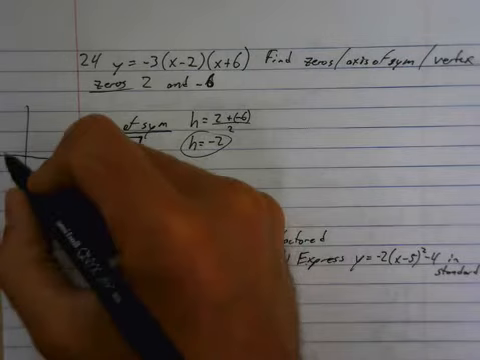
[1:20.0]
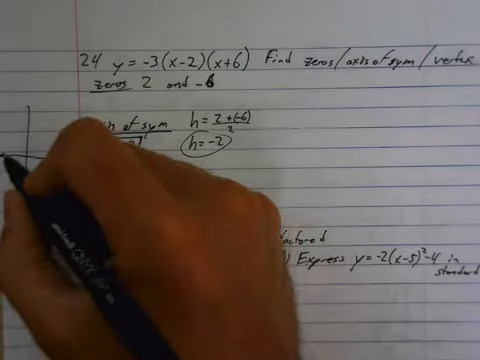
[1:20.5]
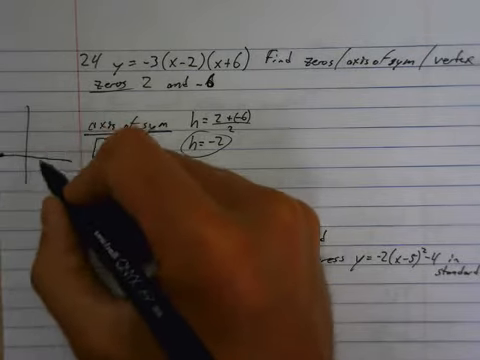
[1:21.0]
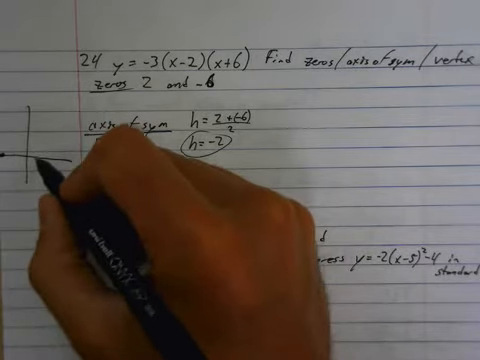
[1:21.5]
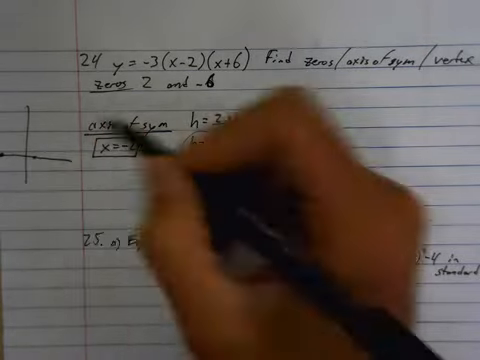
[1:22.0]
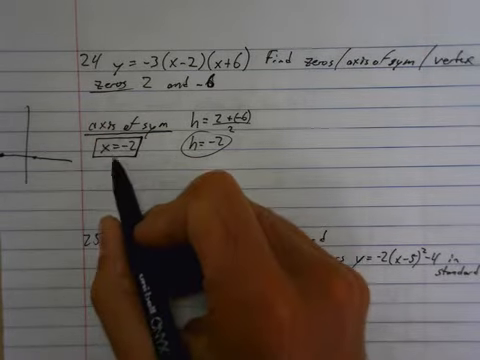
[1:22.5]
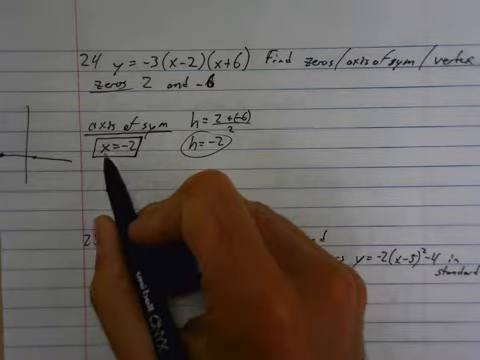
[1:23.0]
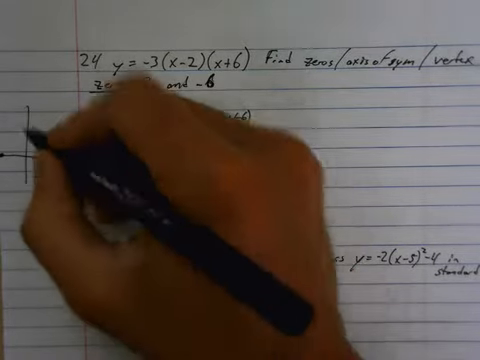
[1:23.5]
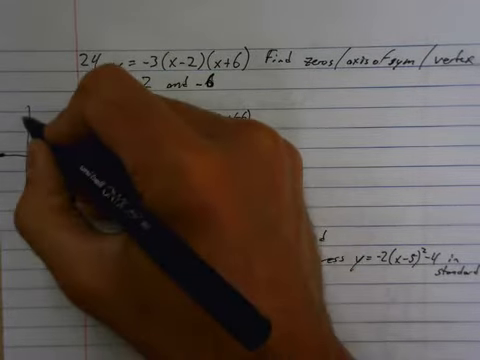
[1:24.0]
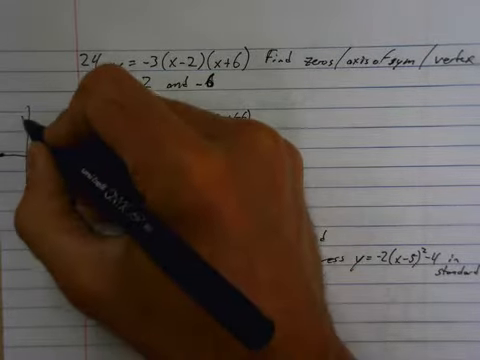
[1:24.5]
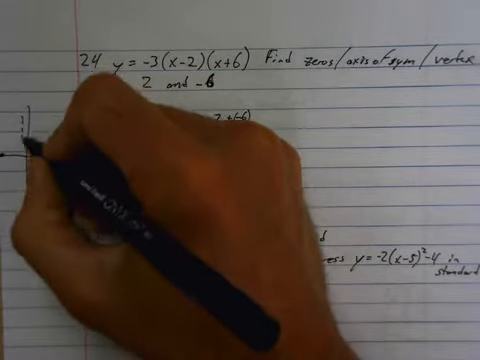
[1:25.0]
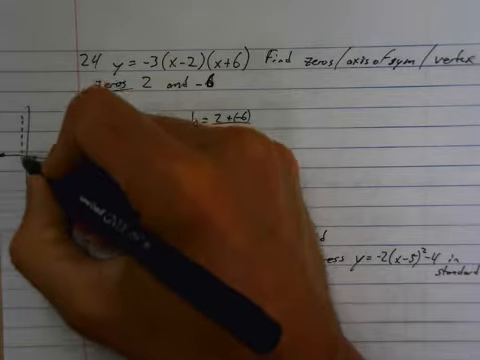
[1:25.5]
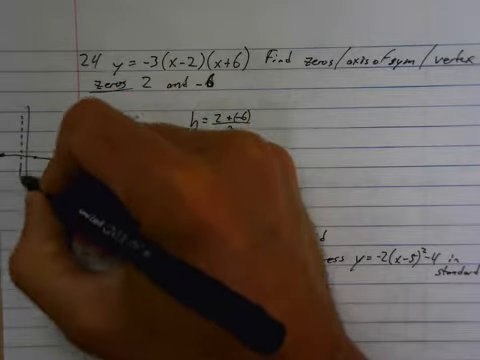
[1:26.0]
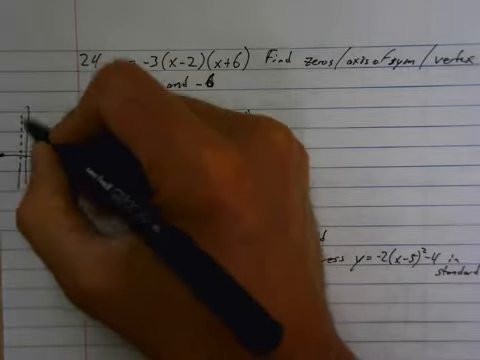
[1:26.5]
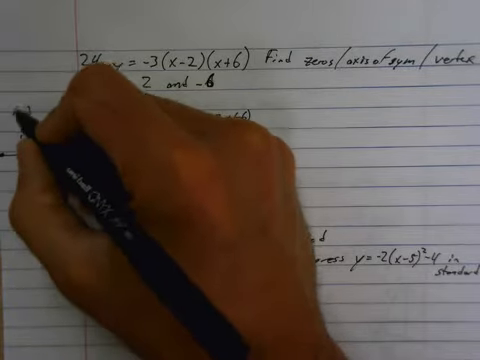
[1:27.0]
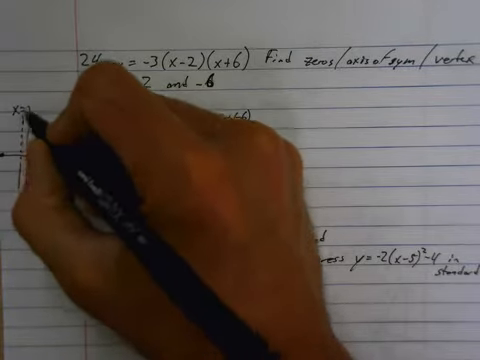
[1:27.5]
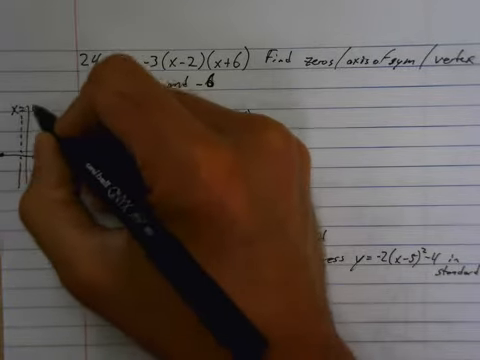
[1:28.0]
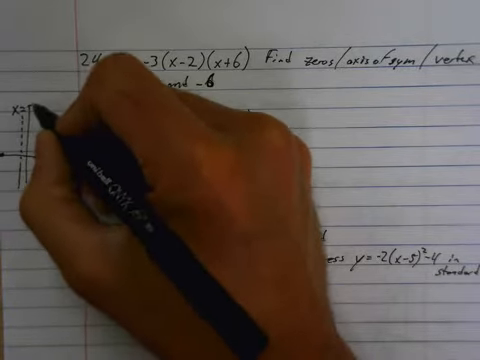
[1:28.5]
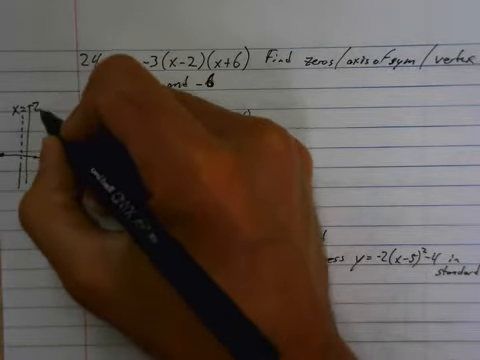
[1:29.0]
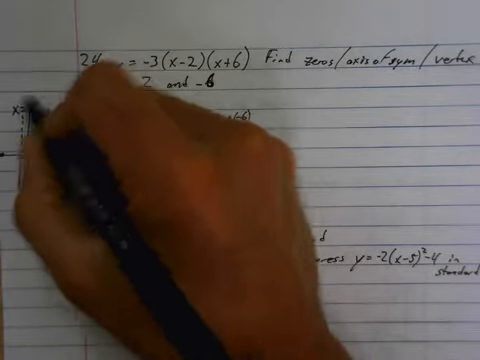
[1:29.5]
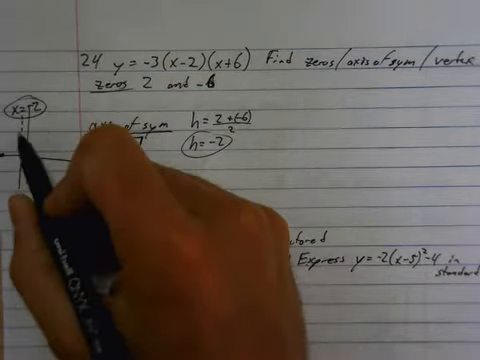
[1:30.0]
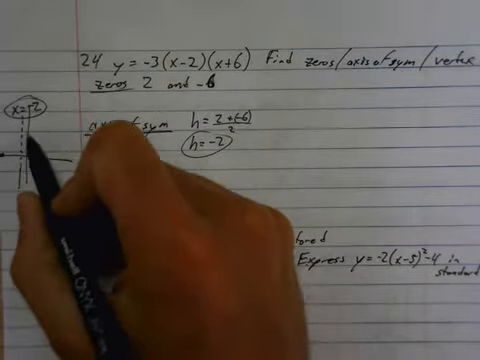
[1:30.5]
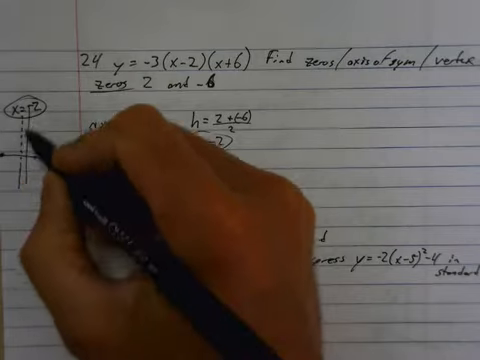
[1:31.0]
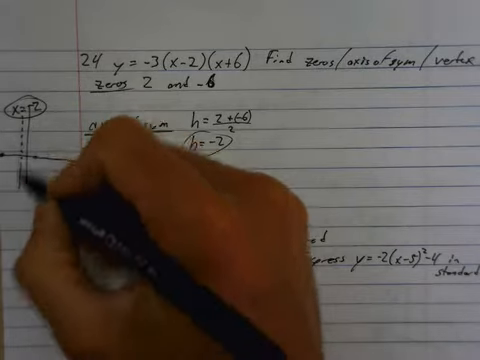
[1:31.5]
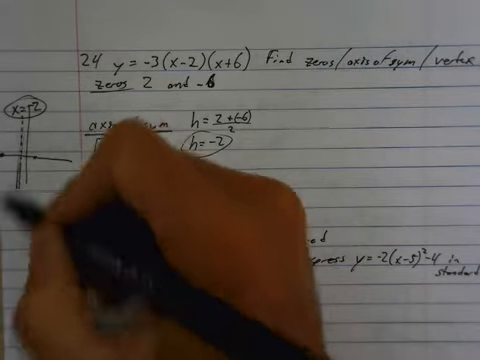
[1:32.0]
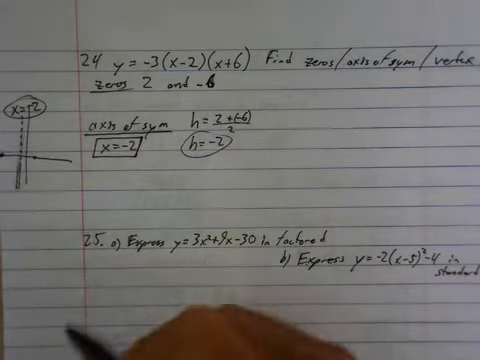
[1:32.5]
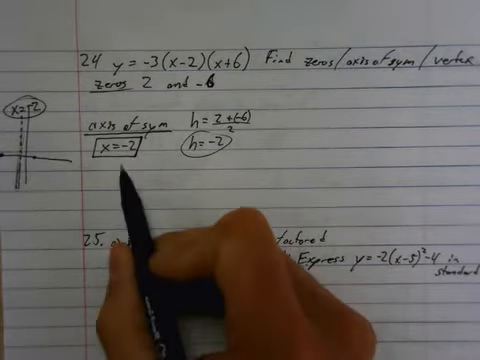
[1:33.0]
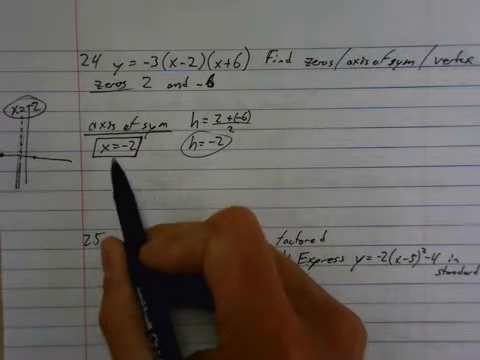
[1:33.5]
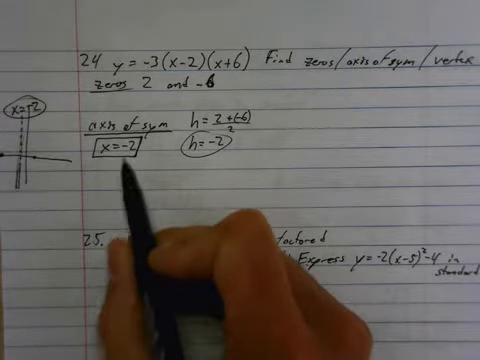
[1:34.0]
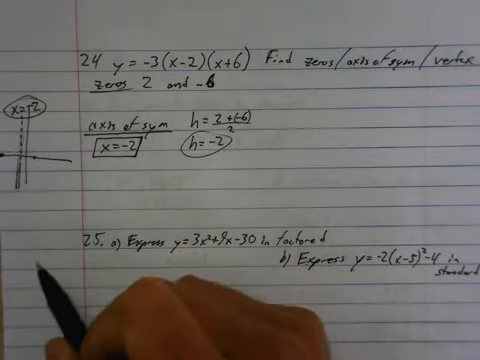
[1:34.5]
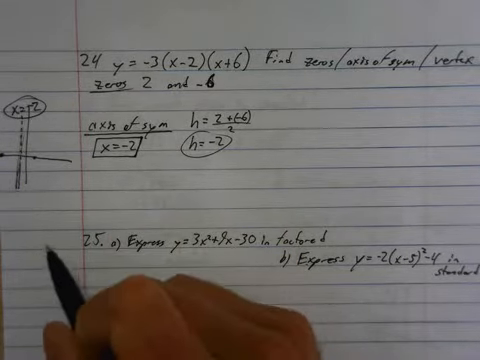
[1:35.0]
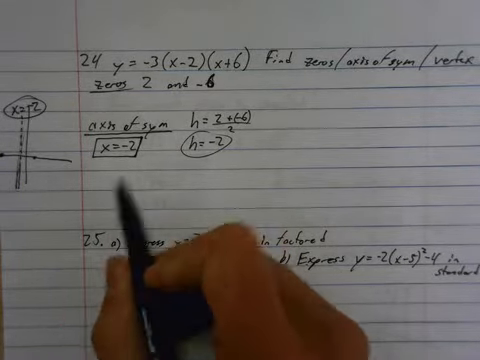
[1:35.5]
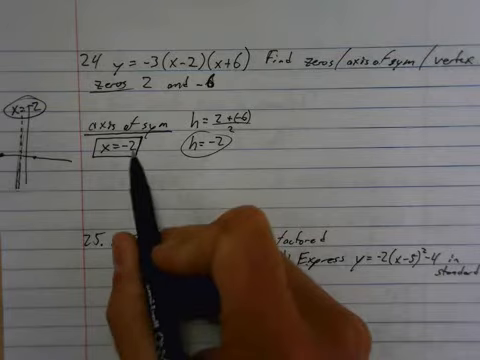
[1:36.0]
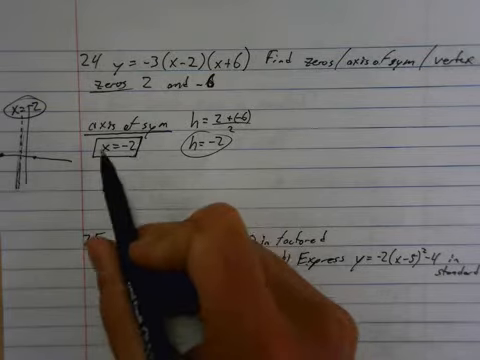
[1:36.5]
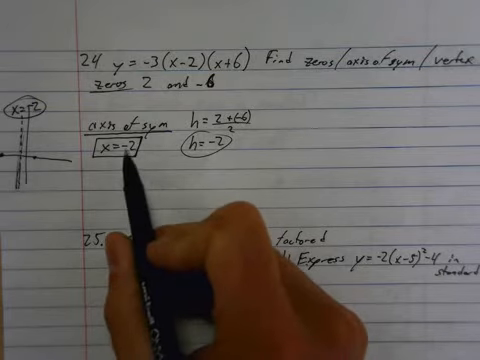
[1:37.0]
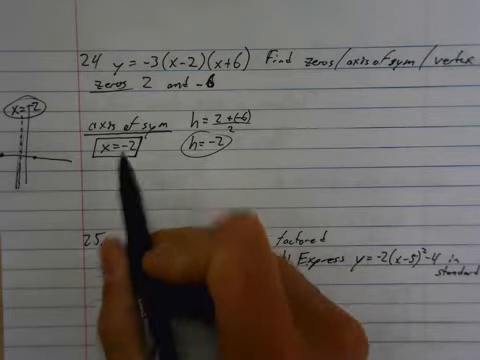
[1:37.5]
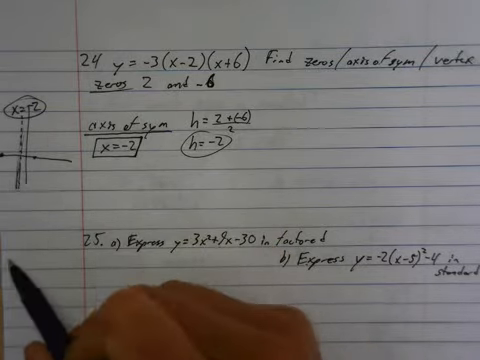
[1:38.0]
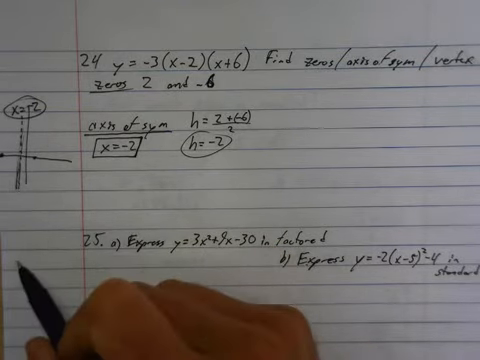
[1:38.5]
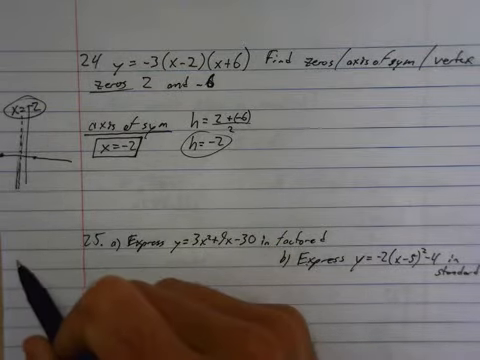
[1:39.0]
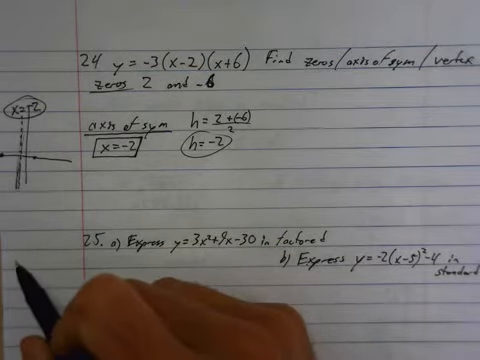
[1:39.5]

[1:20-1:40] The person, a man or woman, keeps writing solutions on the binder paper in view of the camera. They draw a vertical line down and a horizontal line across it, then draw dots on the left and right sides of the horizontal line. They point at the earlier work under "axis of symmetry", where "x = -2" is in a square and to the right of it is "h = 2 + -6". They start drawing a dotted line on the left side of the vertical line, write "x = +2" at the top of the vertical line, and fill in the dotted line below as they point at x = -2. They continue writing.